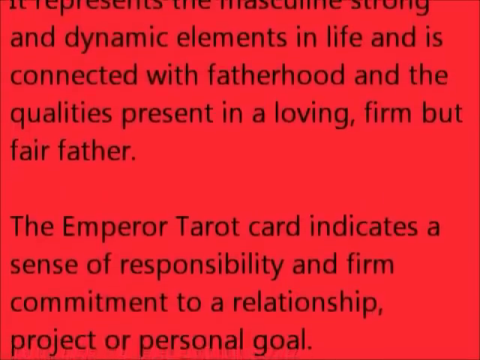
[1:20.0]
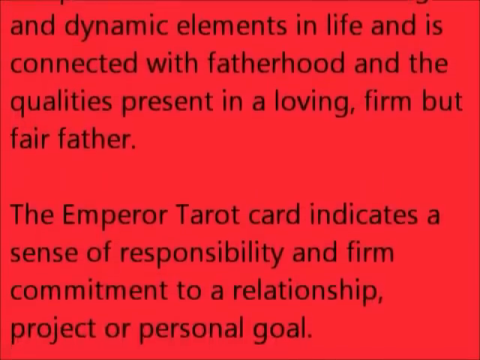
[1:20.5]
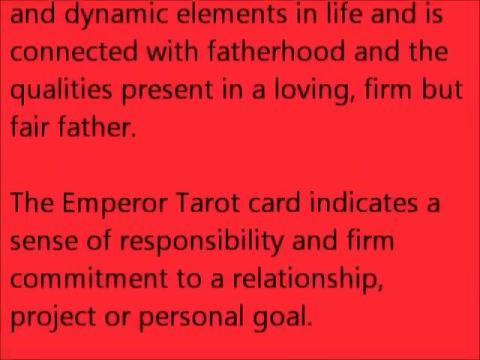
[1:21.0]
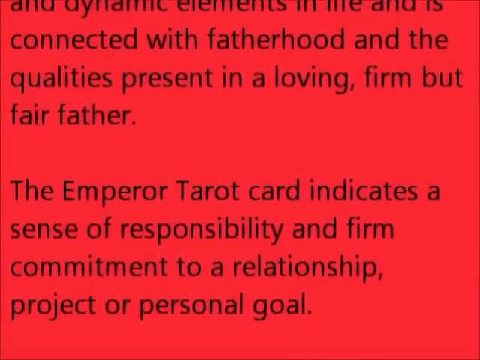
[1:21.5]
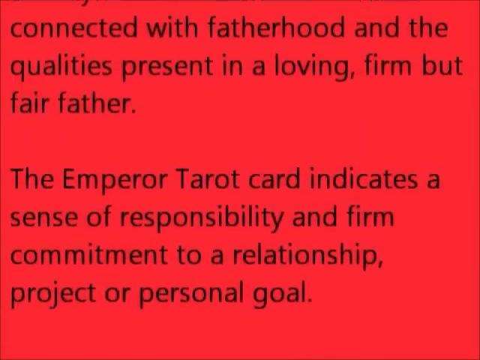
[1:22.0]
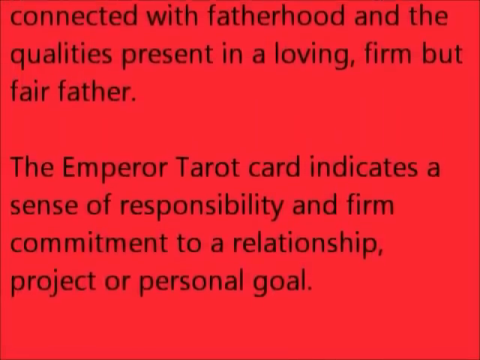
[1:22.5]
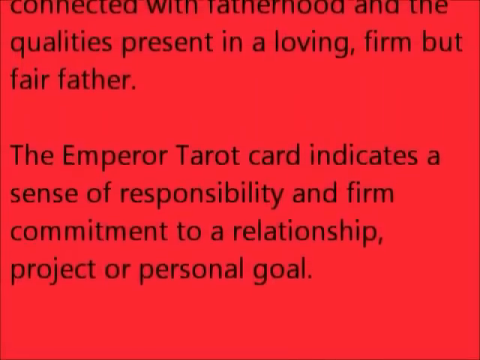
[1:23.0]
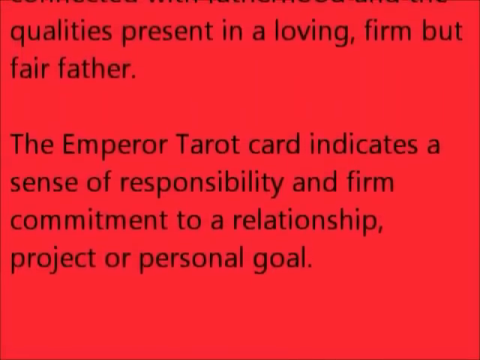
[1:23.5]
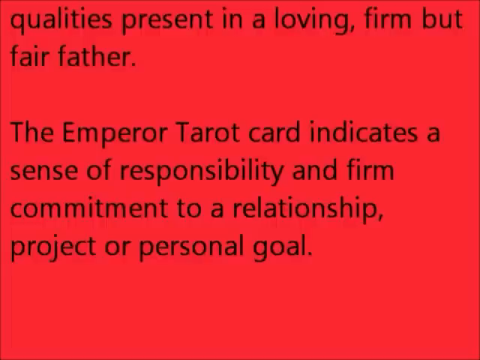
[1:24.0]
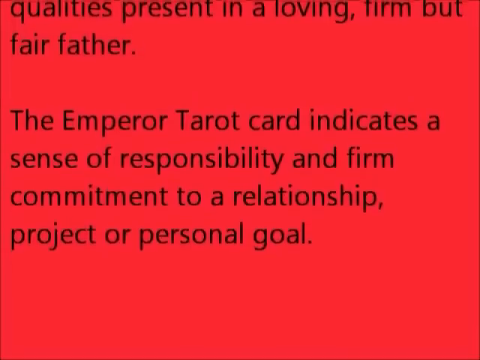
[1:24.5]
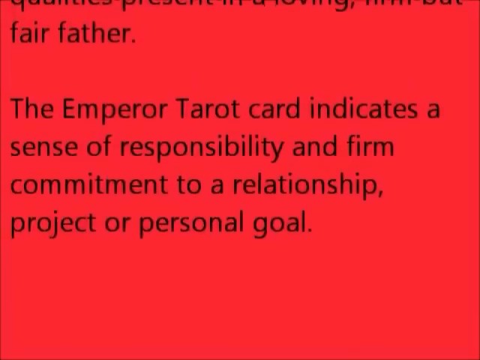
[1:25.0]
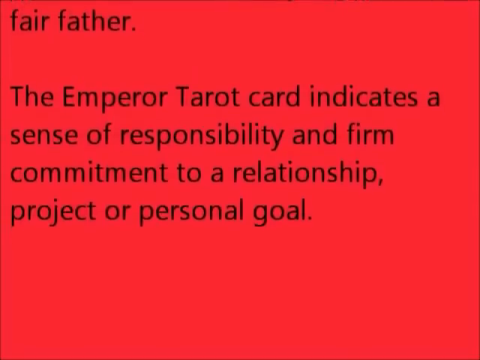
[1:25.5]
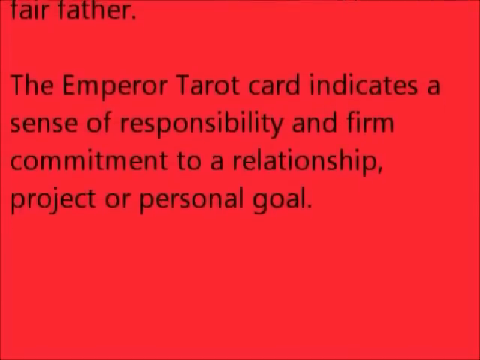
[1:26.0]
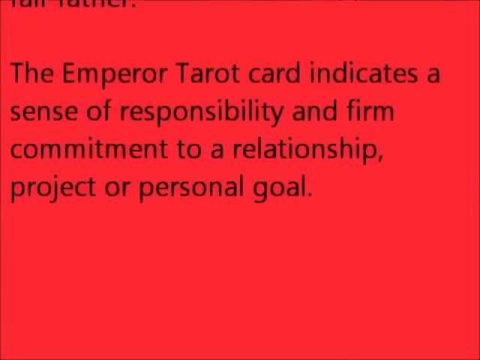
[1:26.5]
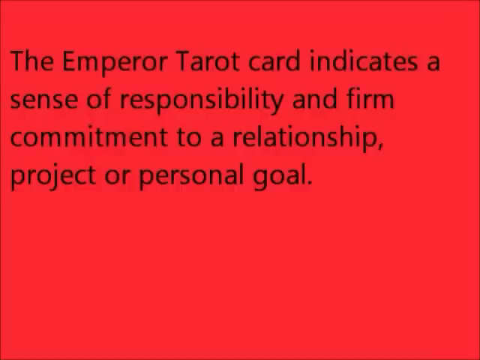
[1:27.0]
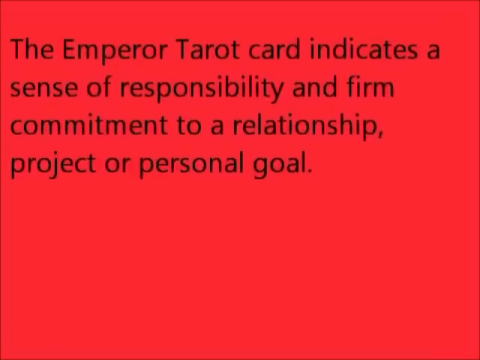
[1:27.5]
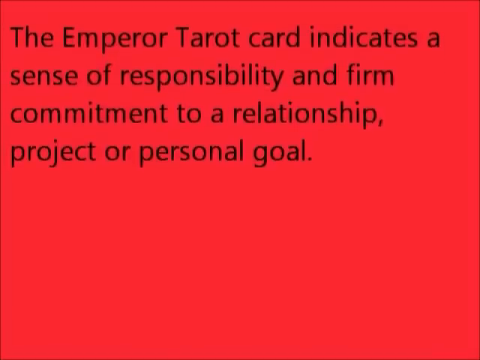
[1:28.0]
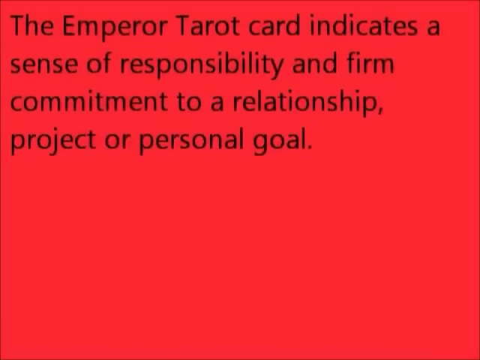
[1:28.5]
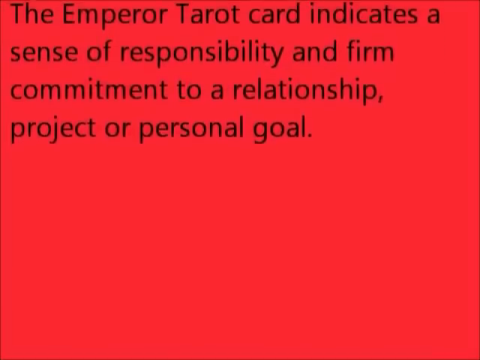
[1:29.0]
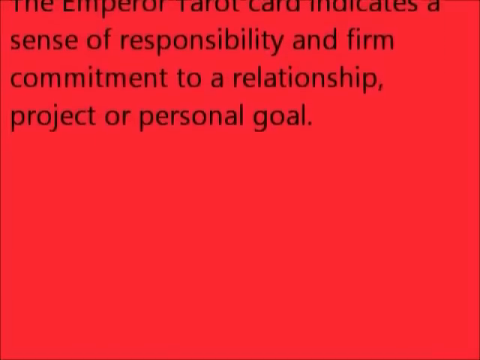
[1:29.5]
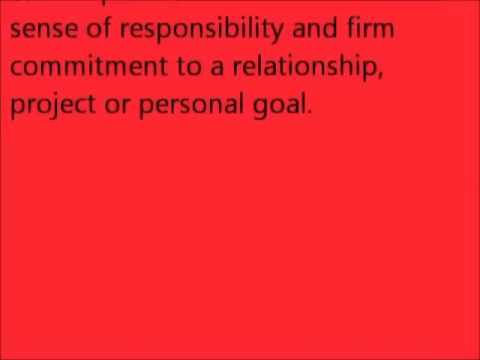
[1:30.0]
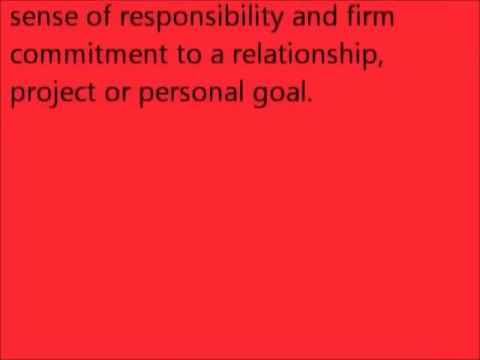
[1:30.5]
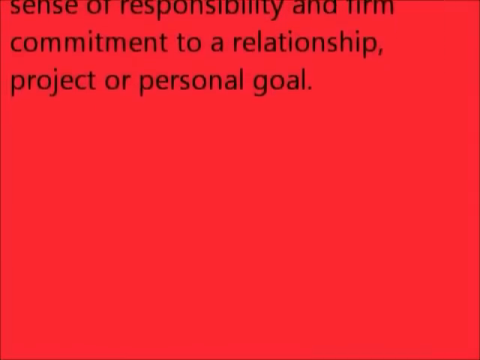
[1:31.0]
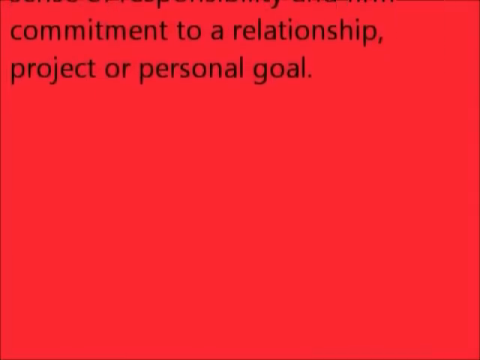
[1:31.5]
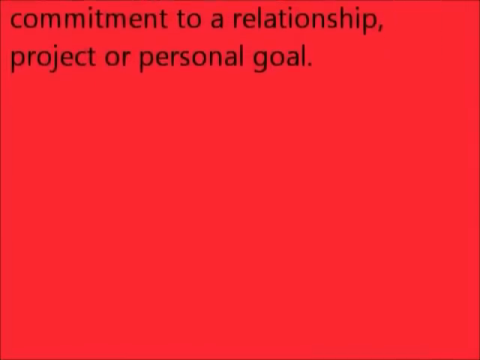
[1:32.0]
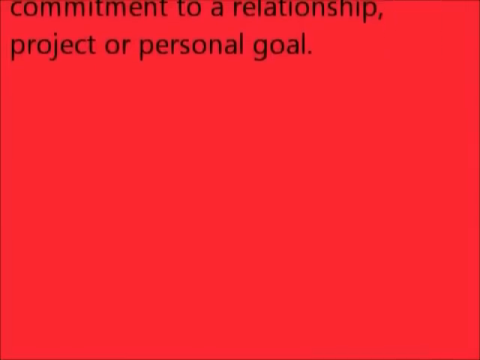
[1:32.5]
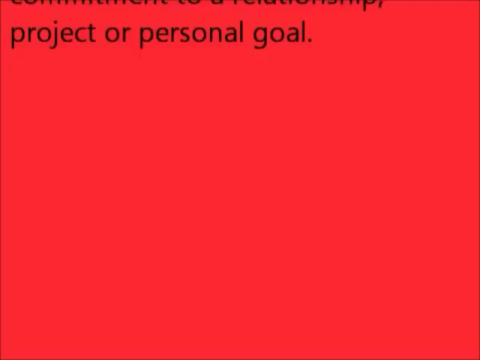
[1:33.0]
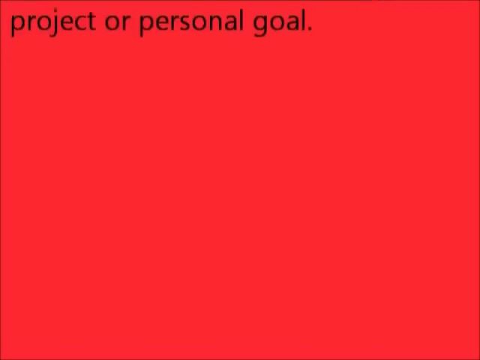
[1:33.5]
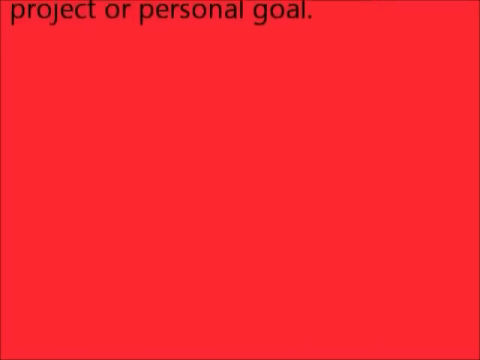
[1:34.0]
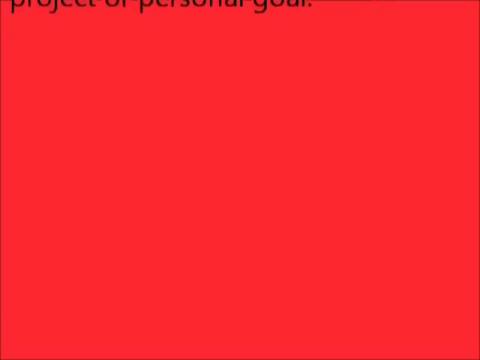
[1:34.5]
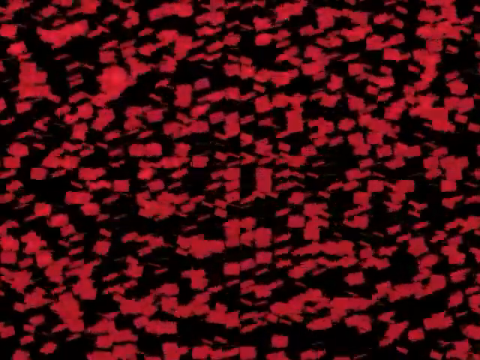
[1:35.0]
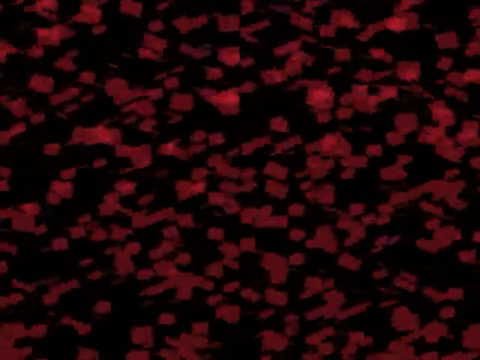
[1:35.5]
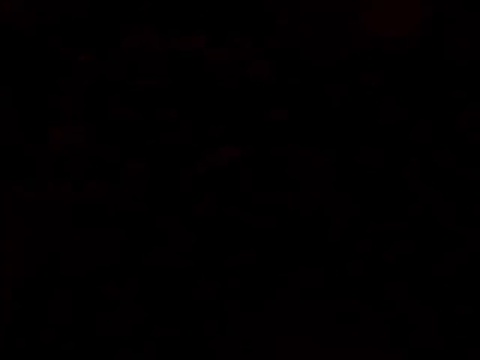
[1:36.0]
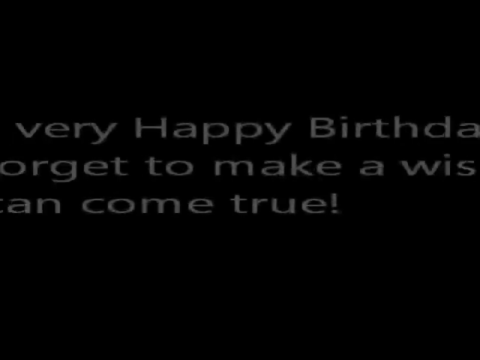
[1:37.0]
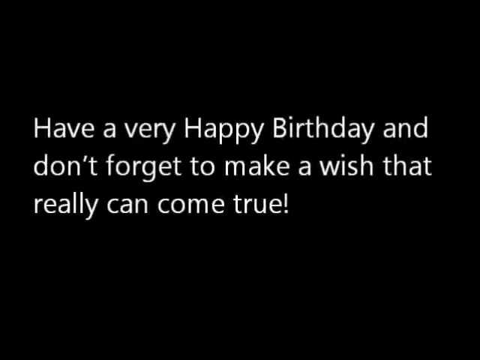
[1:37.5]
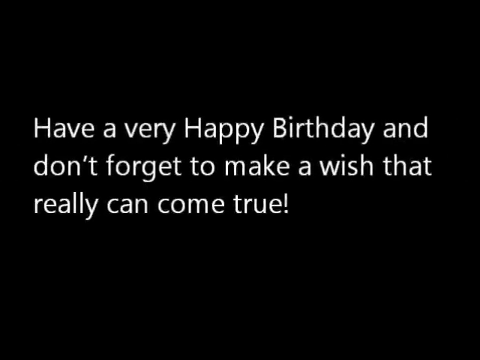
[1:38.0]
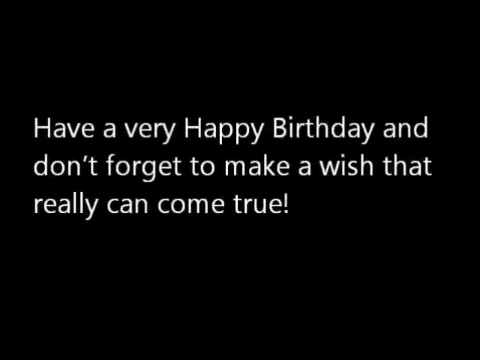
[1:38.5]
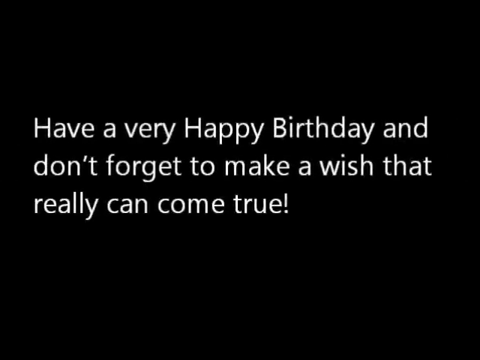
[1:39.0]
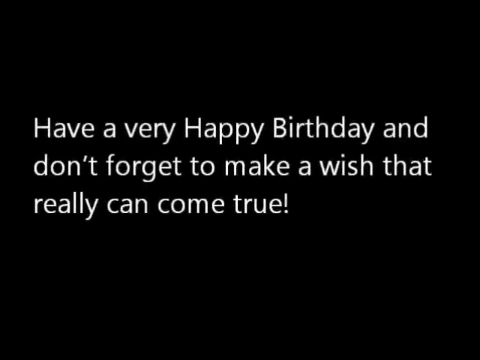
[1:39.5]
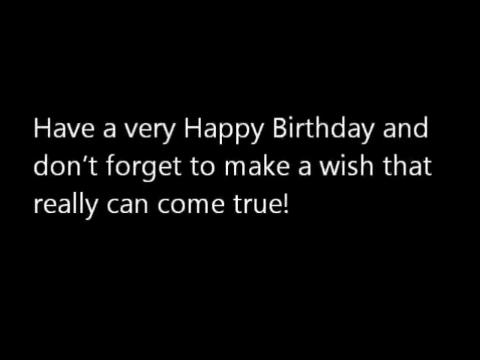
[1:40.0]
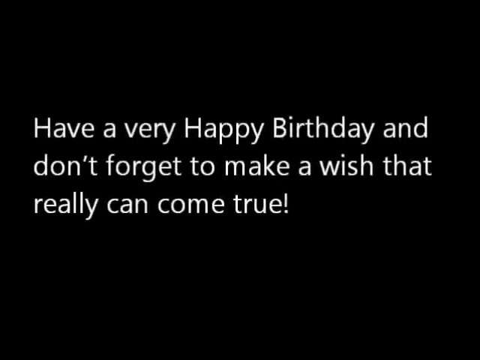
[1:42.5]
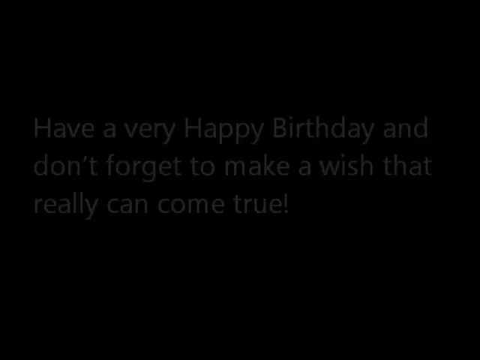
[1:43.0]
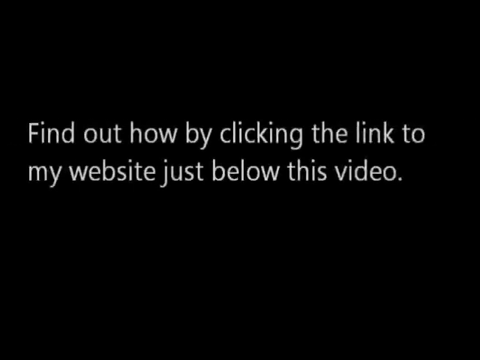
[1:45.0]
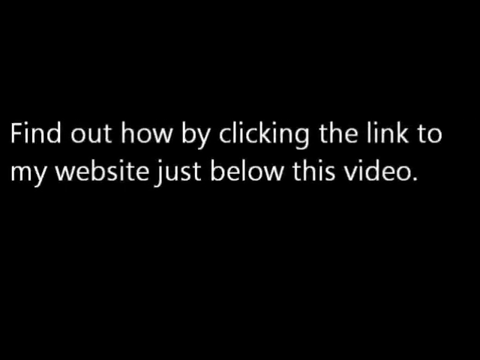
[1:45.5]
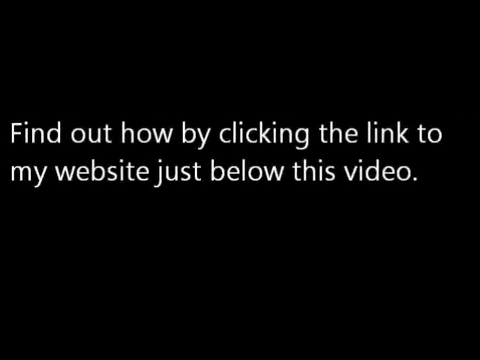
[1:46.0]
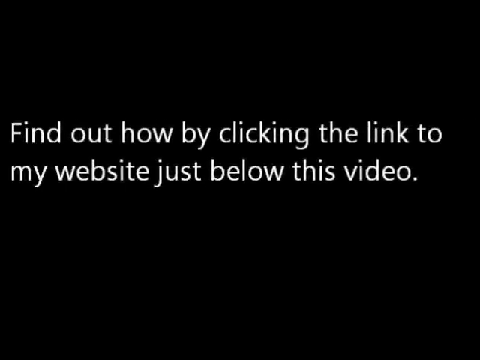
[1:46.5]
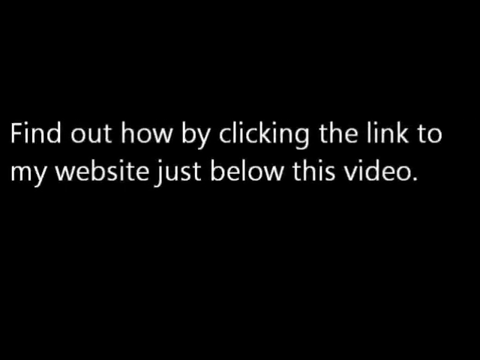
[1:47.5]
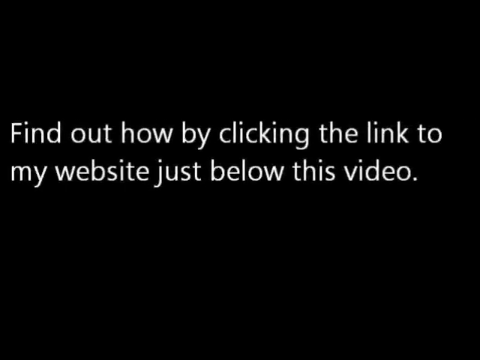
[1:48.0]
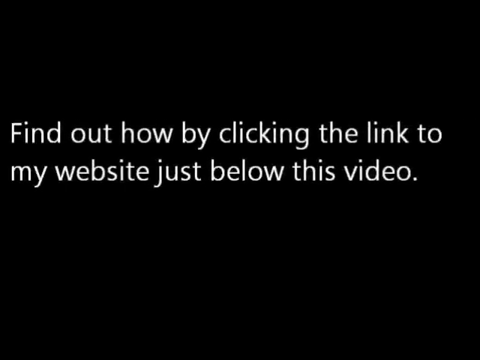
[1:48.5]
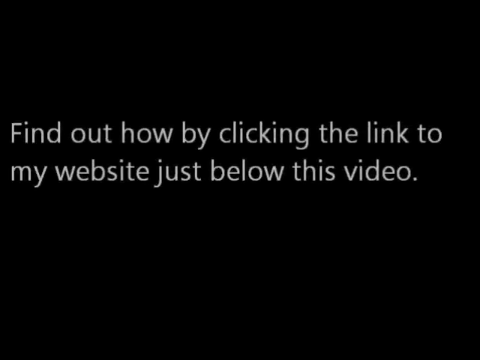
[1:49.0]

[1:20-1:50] The text continues: "the emperor tarot card indicates a sense of responsibility and firm commitment to a relationship project or personal goal." The messages then disappear one by one. The screen changes to show a bit of red and a bit of black as its particles break off into smaller particles. Next, "have a very happy birthday and don't forget to make a wish that really can come true" appears in white on a very dark black background. The screen changes once more to say "find out how by clicking the link to my website just below this video."